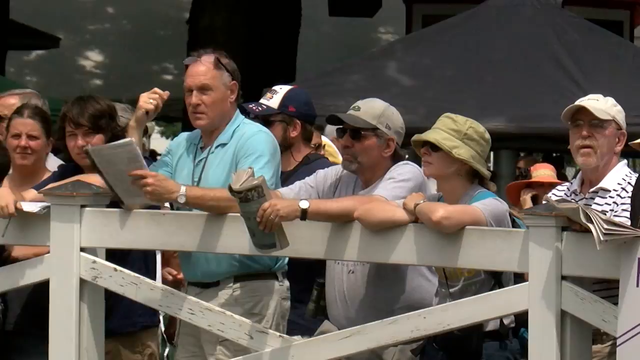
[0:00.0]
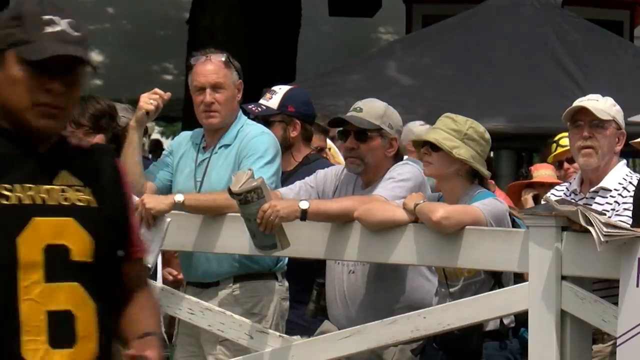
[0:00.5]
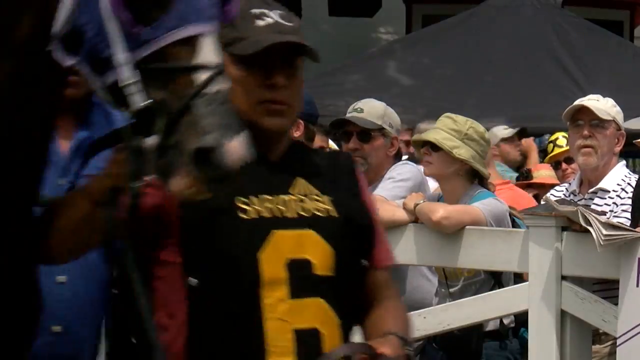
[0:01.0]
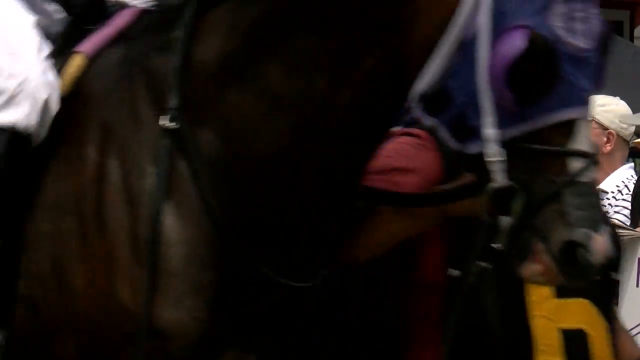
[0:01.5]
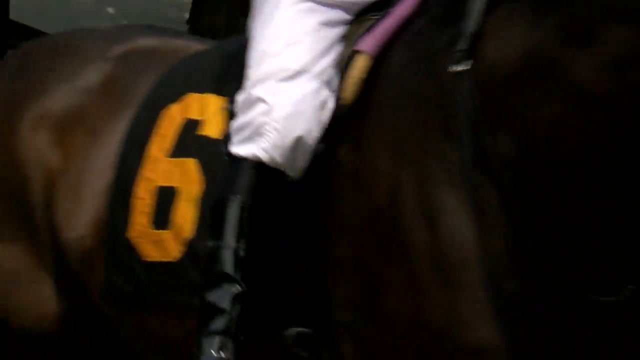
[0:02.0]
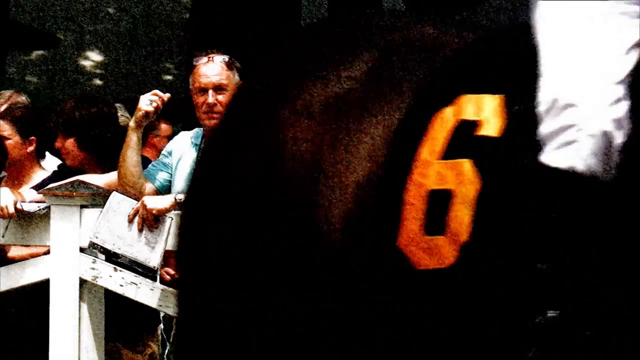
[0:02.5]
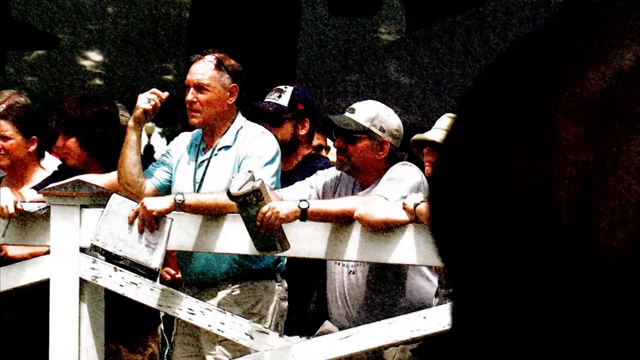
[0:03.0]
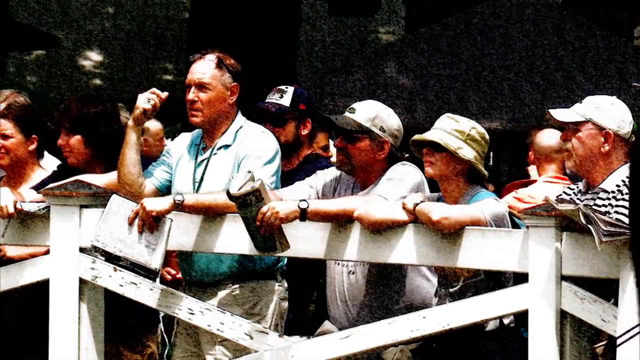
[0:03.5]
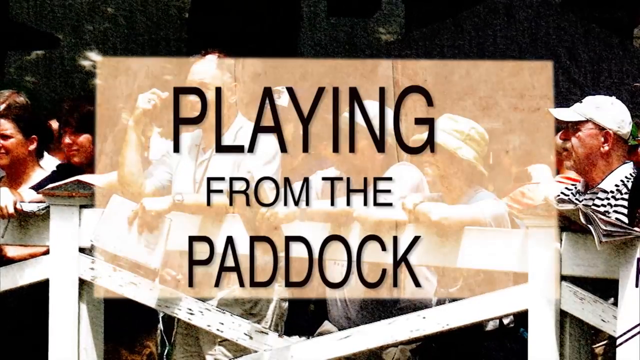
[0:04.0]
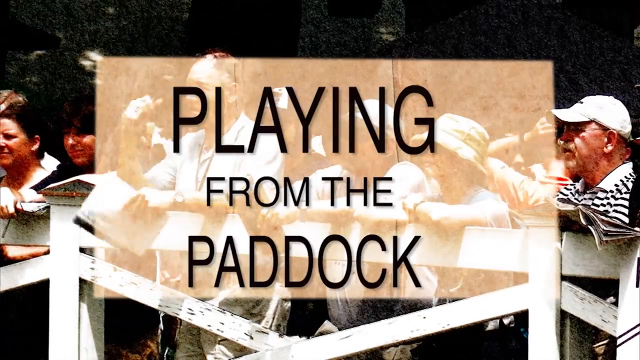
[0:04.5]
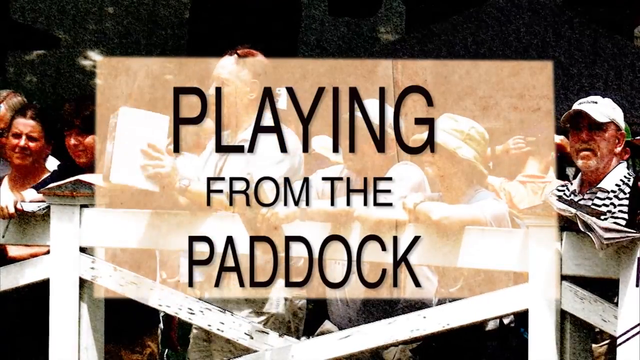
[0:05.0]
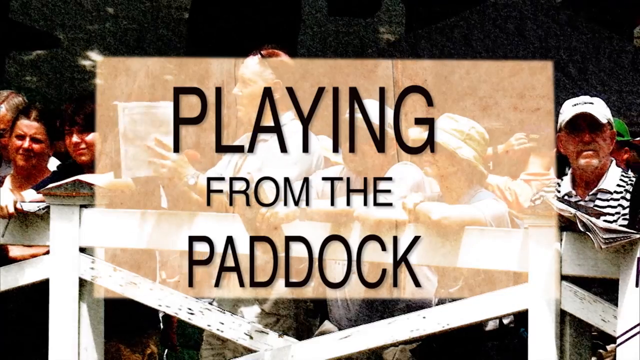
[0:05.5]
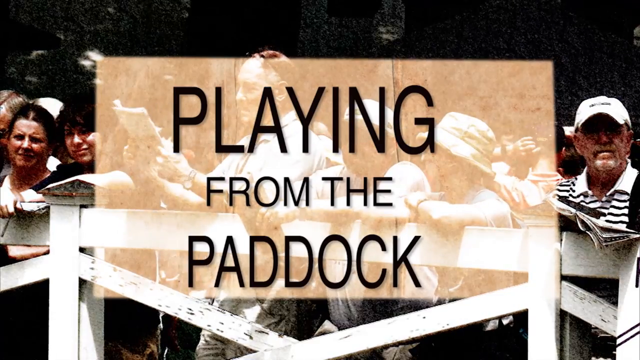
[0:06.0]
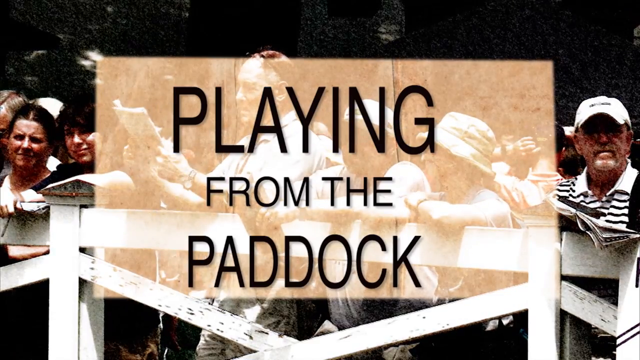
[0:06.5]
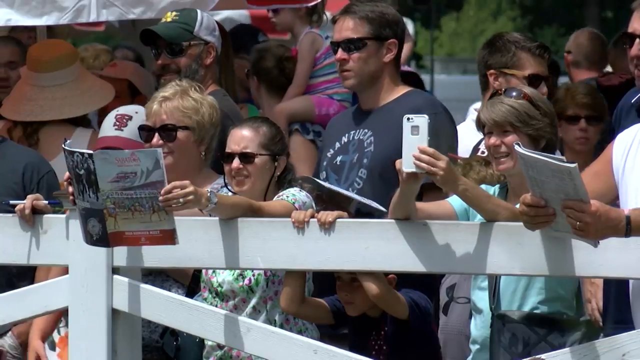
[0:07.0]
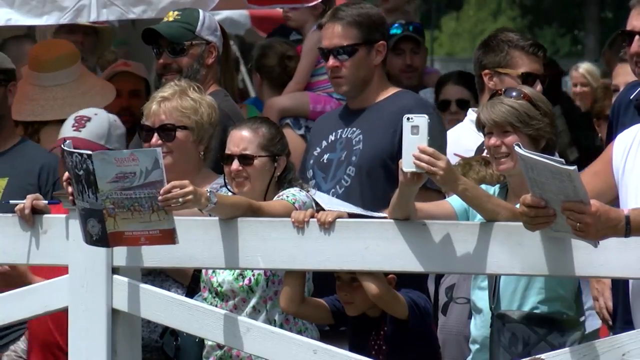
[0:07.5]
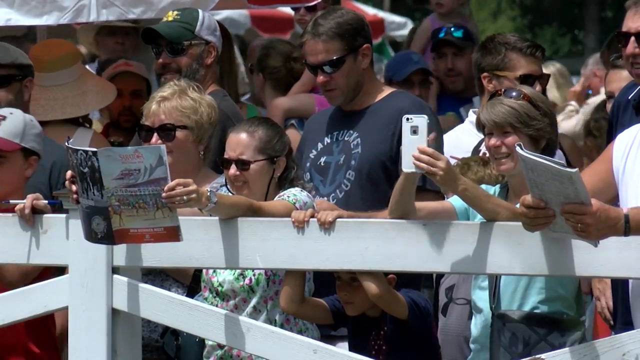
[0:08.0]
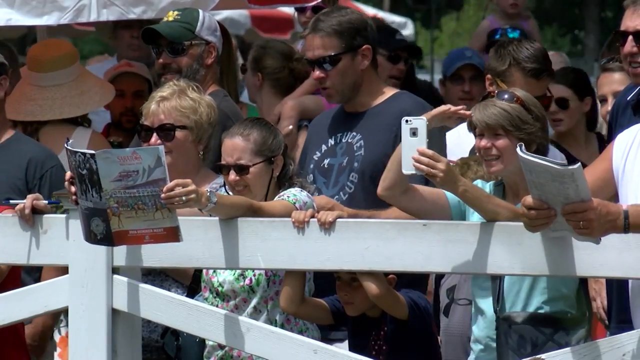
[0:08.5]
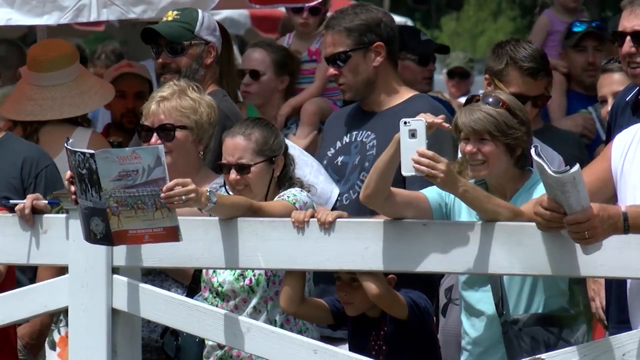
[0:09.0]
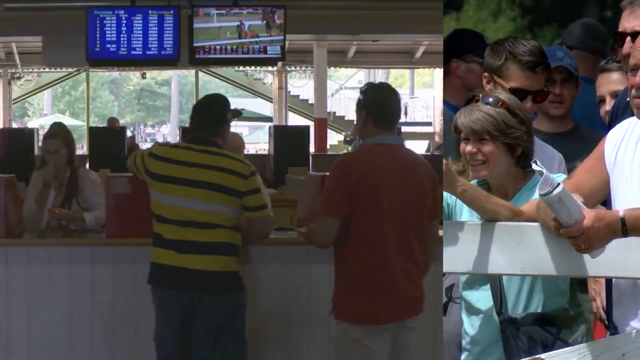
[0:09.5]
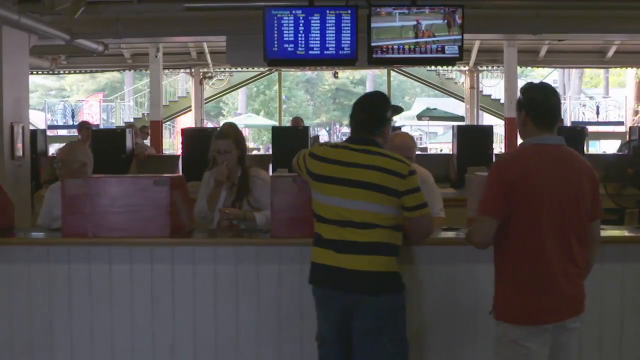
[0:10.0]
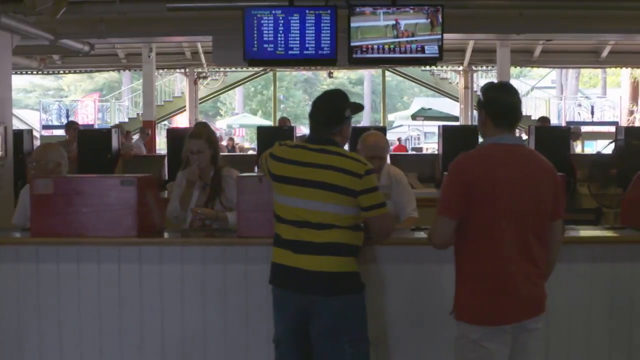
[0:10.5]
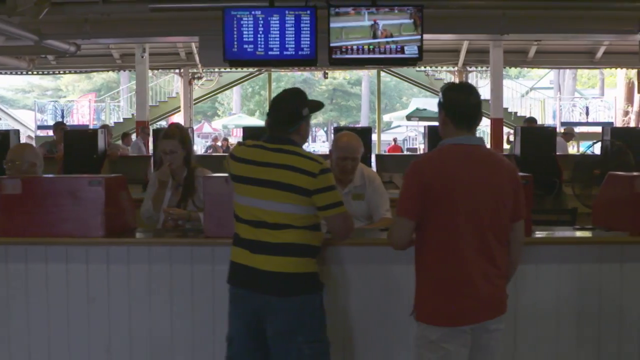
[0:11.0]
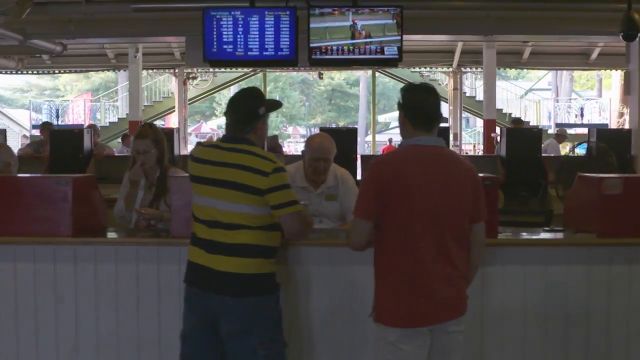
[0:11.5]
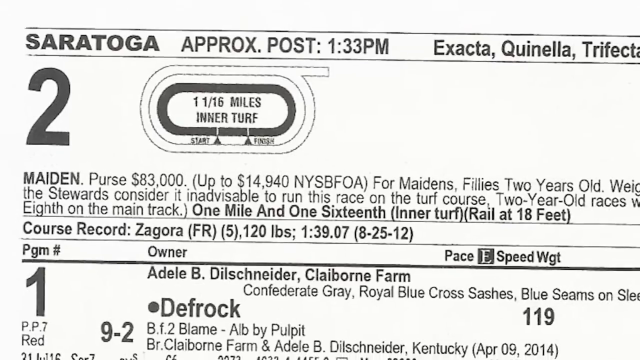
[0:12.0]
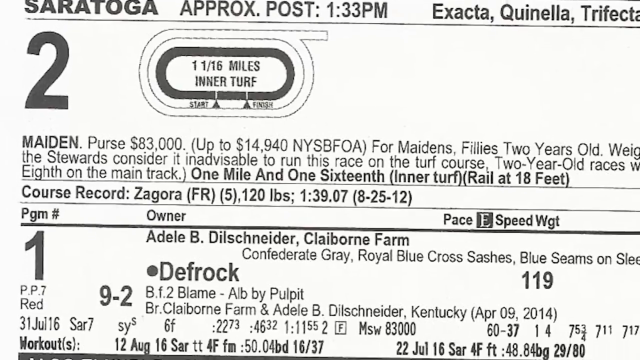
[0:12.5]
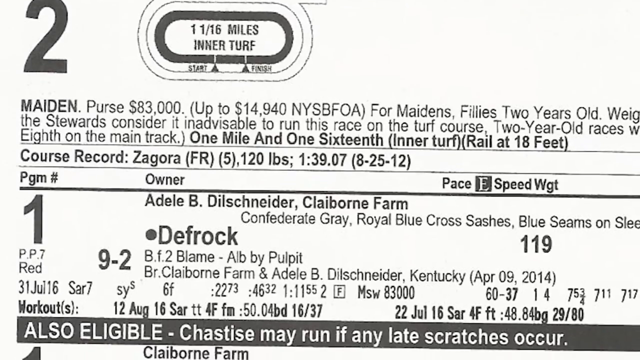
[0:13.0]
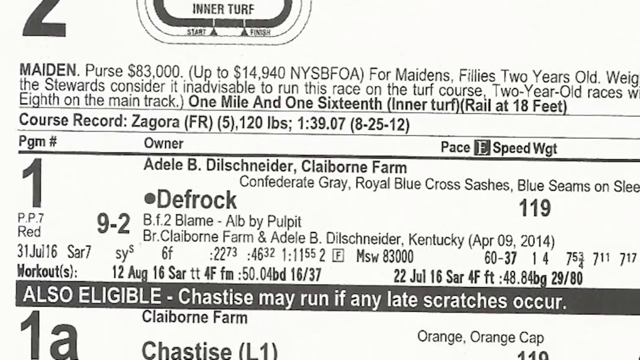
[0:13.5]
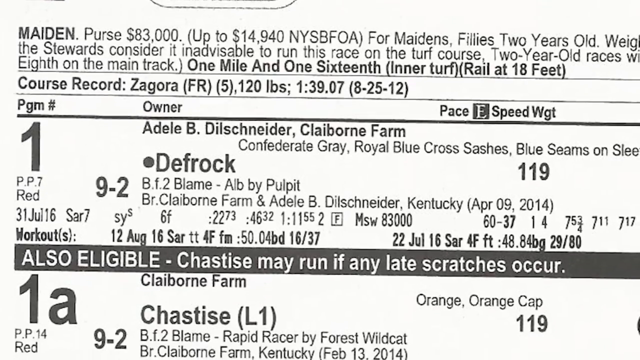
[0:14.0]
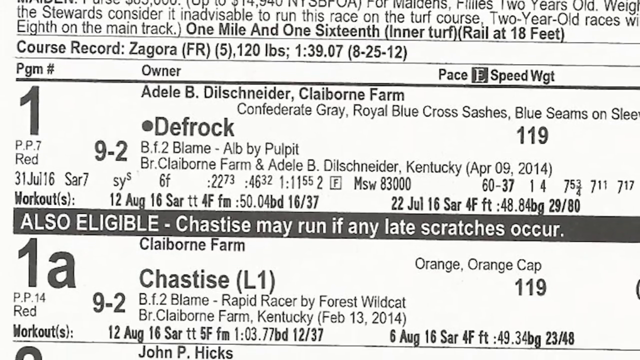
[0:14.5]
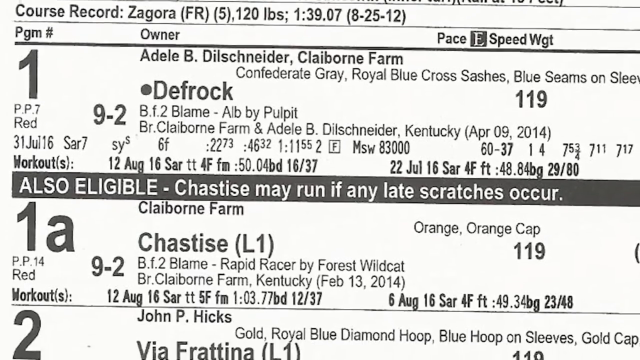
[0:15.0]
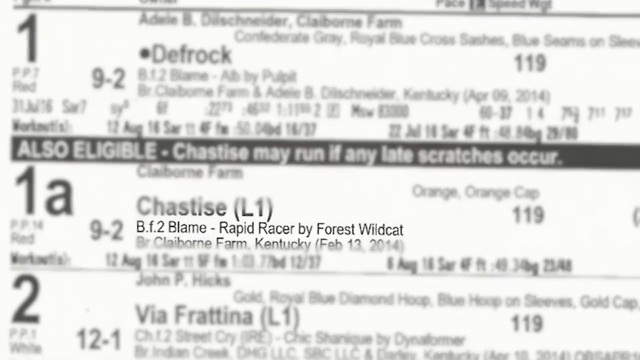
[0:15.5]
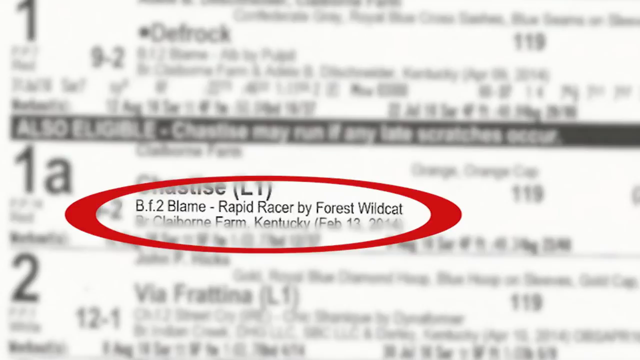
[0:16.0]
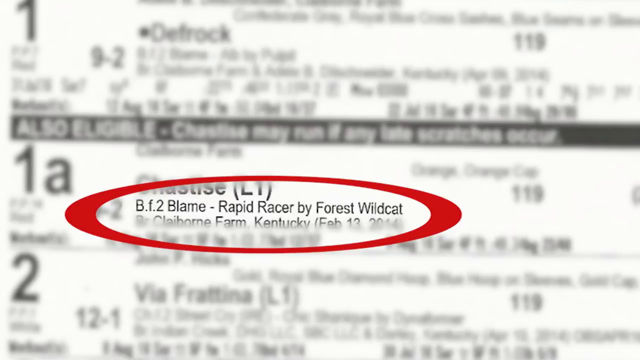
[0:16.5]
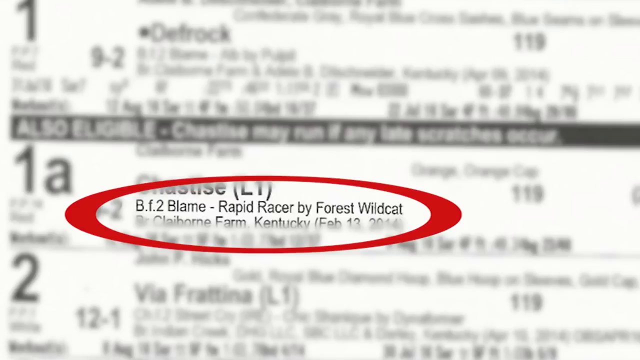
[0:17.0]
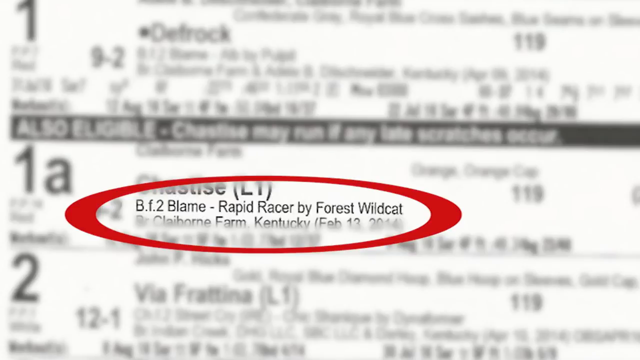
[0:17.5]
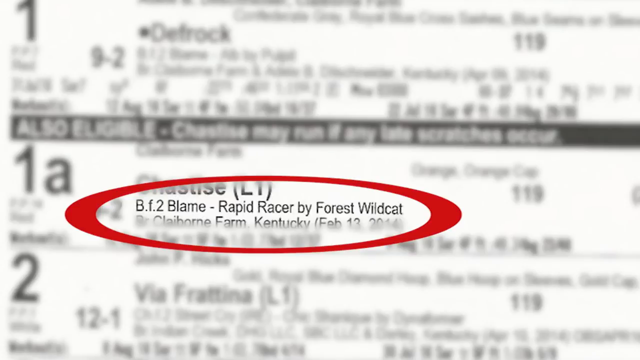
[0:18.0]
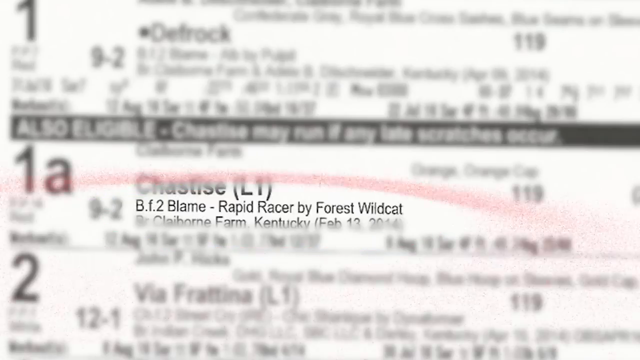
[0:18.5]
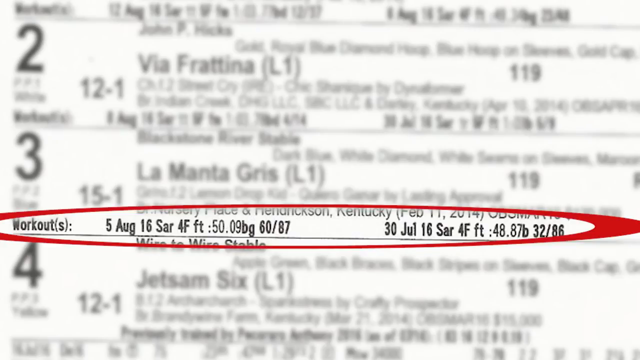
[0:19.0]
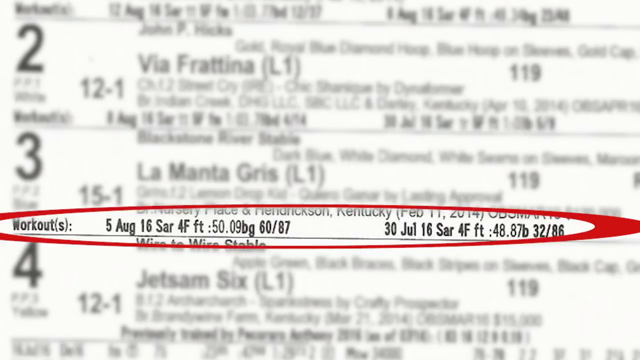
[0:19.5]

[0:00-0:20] People stand near a white wooden fence. A crowd stands around, some holding papers, watching as the horses go by. Black letters read "playing from the paddock," and people are shown taking pictures and looking through books. Inside the racetrack, where people place their bets, the counter is white and the machines used to enter the information are red. Two monitors hang from the ceiling: one shows all the horses that are racing, the other shows the horse track. It is daytime, with the sun visible outside, trees, and umbrellas with people sitting under them. Two men at the counter make a bet; one wears a yellow and black shirt with a white stripe, the other a red shirt. The person helping them is an older bald man in a white shirt. The amount of the bet is shown, followed by the betting ticket, which has something circled showing the date and the time. The video then returns to the people watching from the fence.